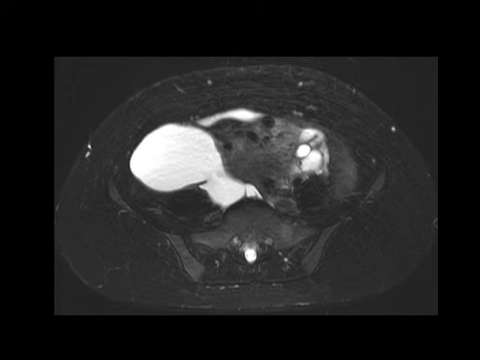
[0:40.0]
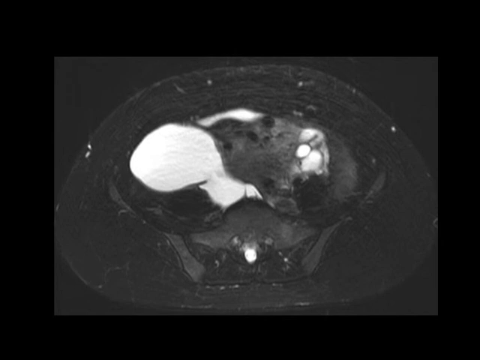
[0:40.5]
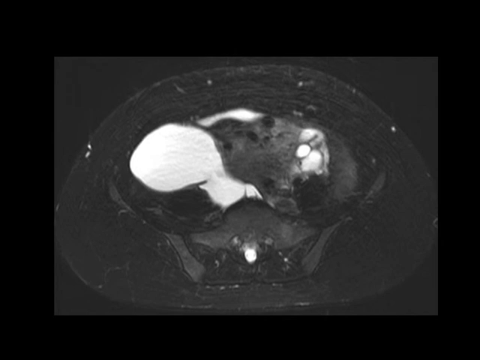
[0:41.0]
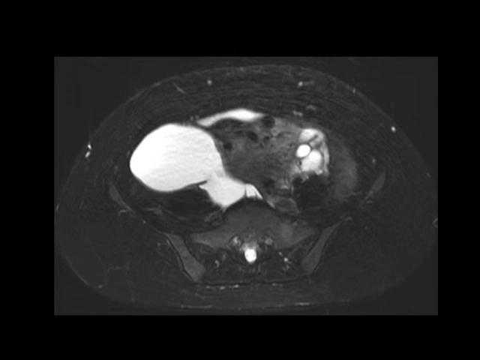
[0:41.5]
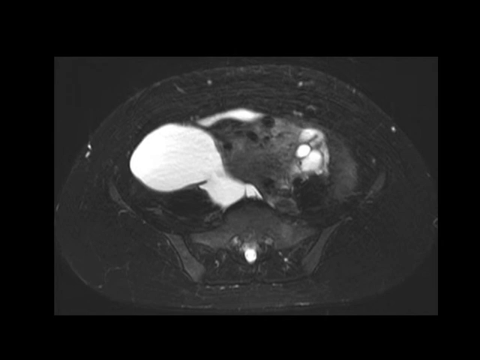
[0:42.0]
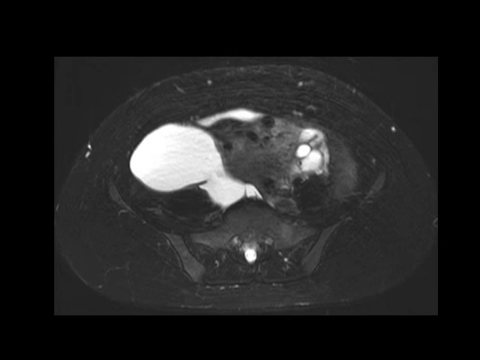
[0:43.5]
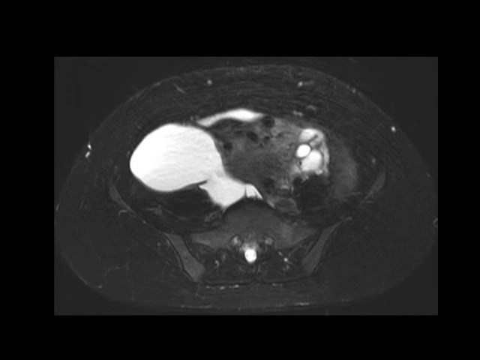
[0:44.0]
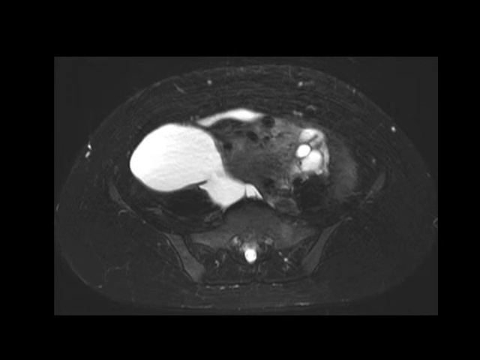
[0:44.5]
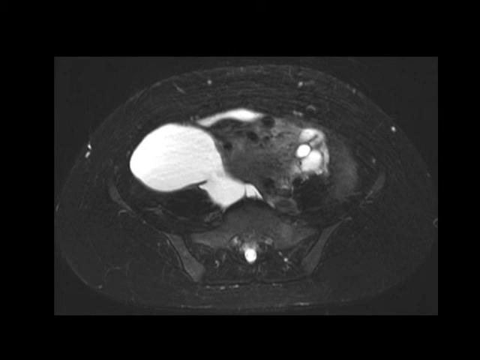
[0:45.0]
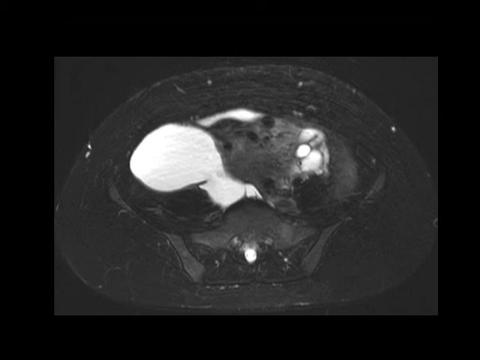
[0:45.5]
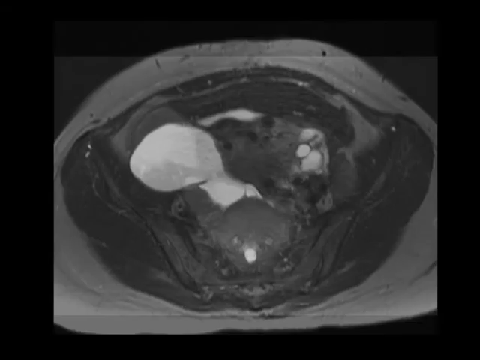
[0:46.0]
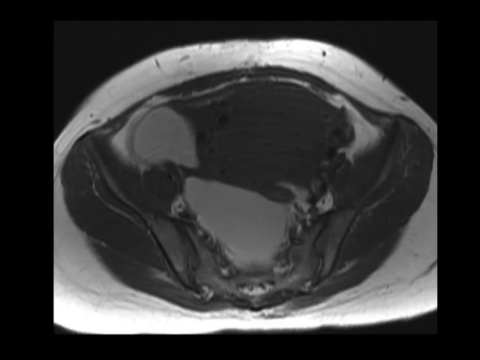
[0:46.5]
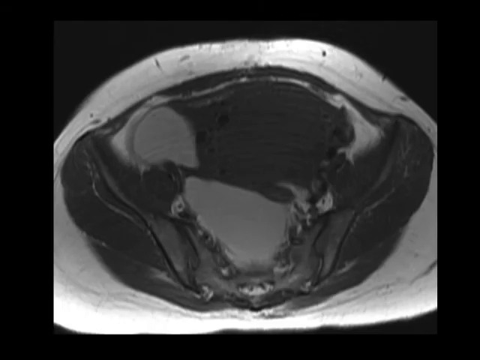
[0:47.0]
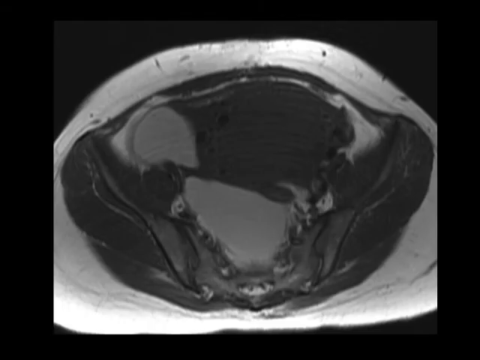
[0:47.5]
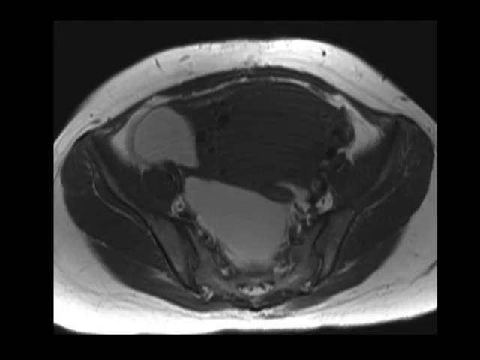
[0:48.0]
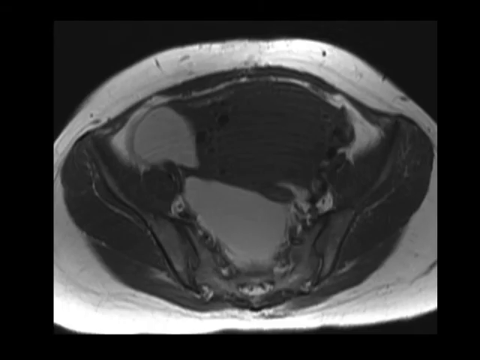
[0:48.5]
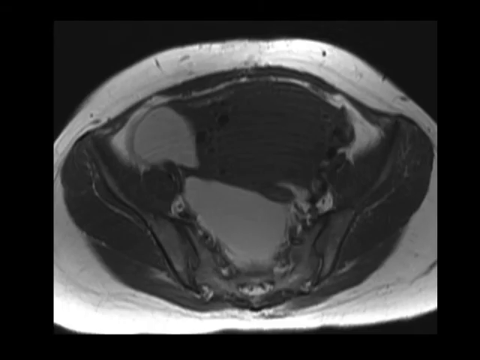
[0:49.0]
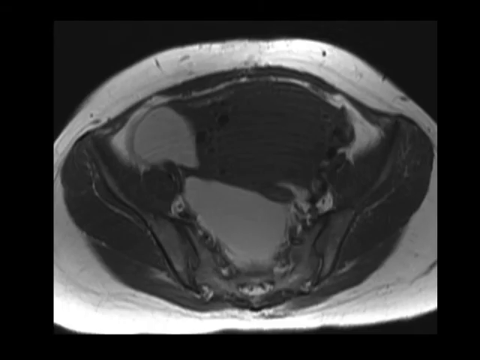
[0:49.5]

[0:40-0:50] The object is more elongated and oval-shaped. There is white up toward the left of a gray mass, larger at the end of this white object and smaller through the middle, with a very small white point, coming underneath a gray bridge-type area. There are multiple striations of black and gray. It is set on a darker gray square on a black background, about a fourth of the way in. Multiple white dots are on this x-ray, with small white areas toward the top. In a second x-ray, white surrounds an oval-shaped object set on a darker gray background with a black border. The x-ray has a white area, lighter gray in the middle, and lighter gray toward the left corner that looks like it could be a teardrop. The lighter gray in the middle has some white areas that are very rough and uneven.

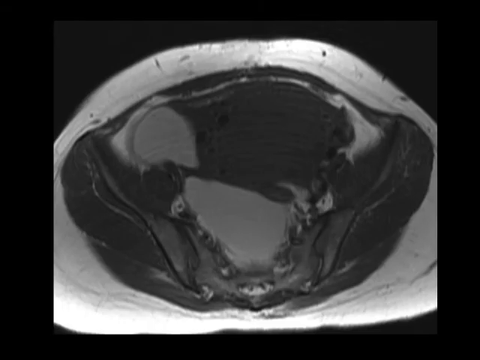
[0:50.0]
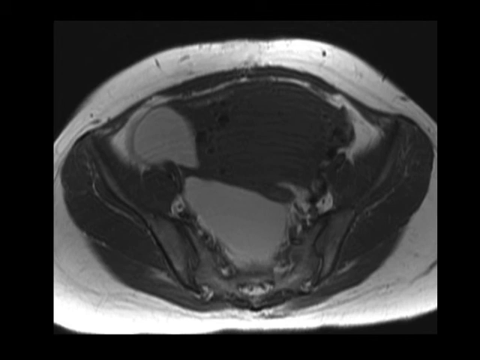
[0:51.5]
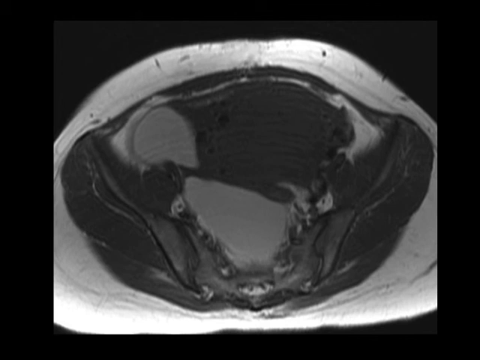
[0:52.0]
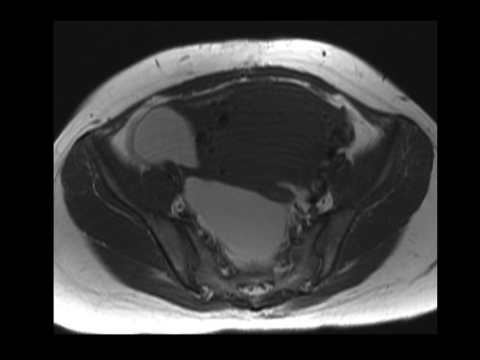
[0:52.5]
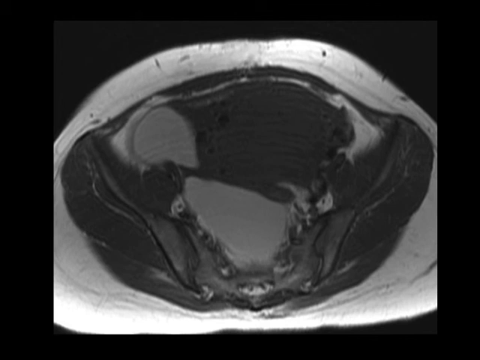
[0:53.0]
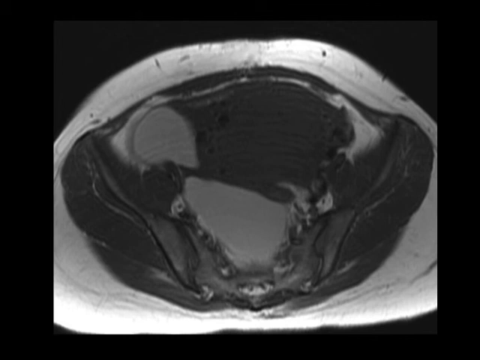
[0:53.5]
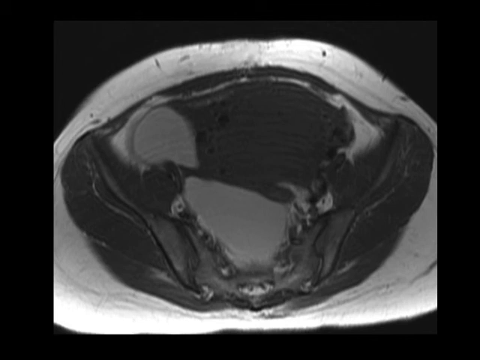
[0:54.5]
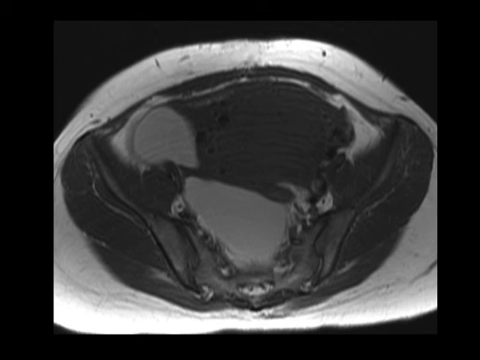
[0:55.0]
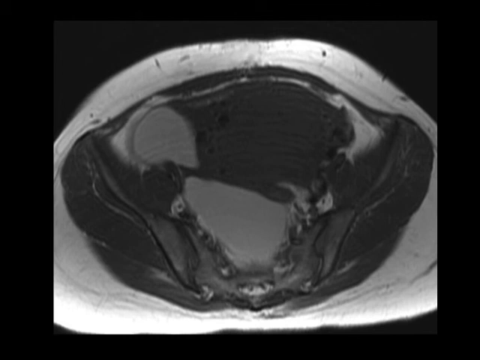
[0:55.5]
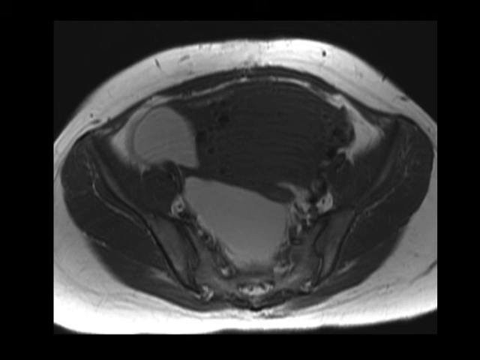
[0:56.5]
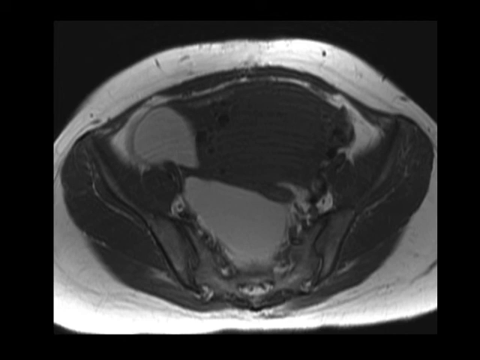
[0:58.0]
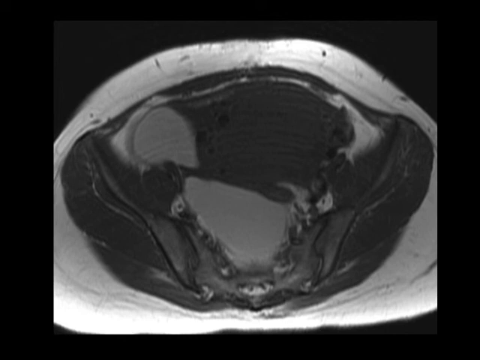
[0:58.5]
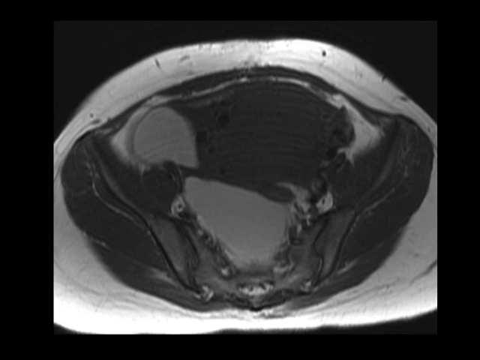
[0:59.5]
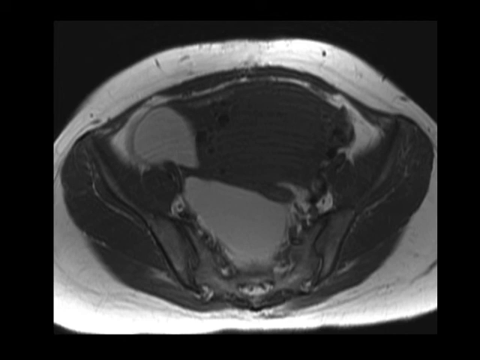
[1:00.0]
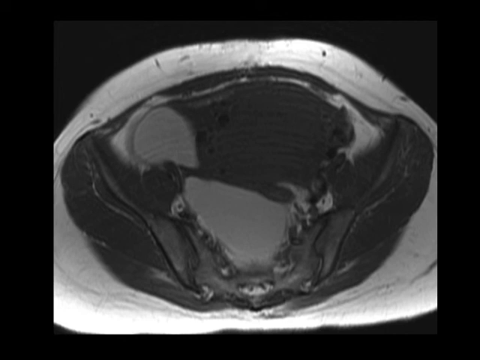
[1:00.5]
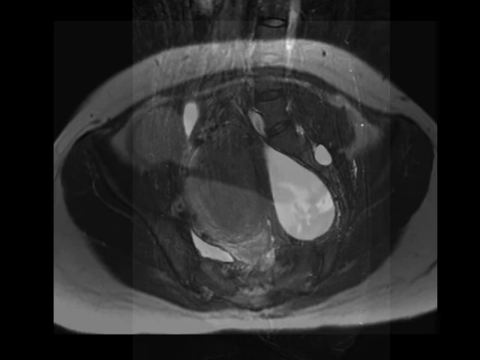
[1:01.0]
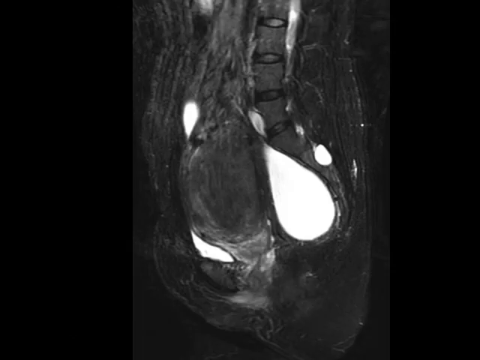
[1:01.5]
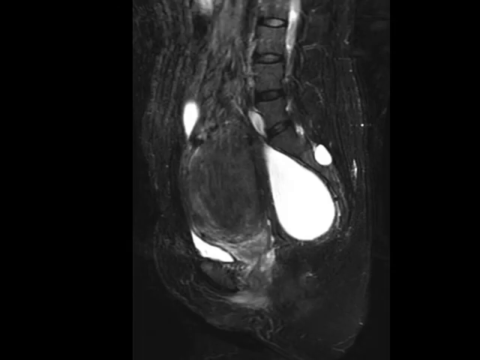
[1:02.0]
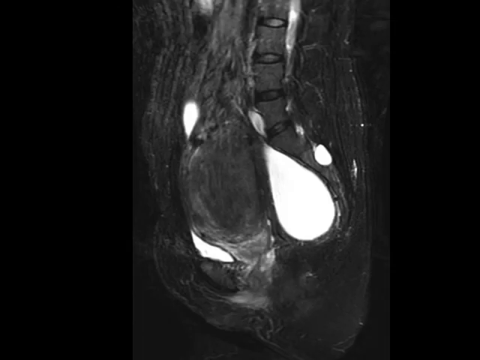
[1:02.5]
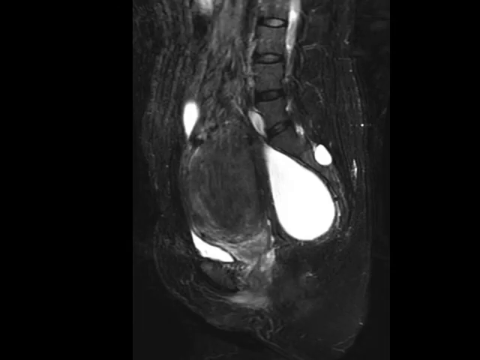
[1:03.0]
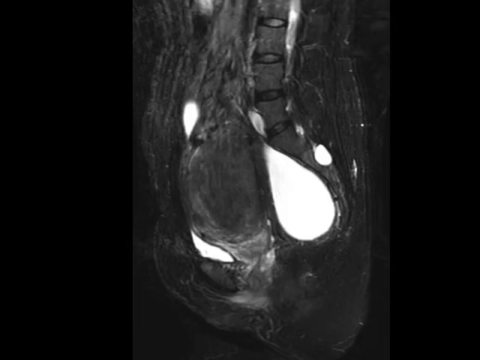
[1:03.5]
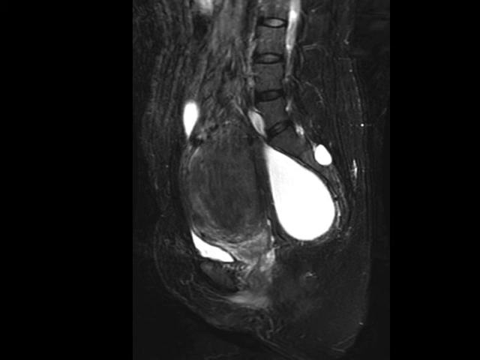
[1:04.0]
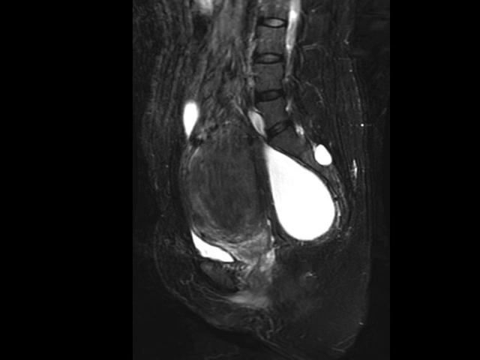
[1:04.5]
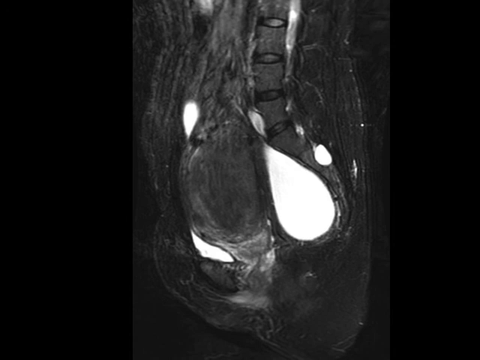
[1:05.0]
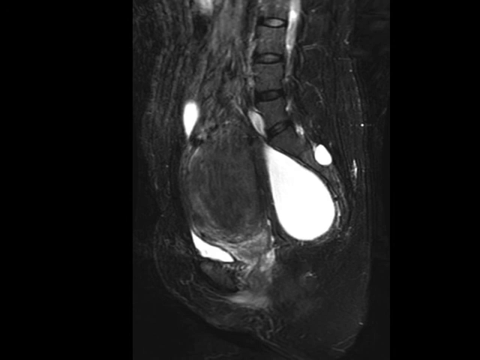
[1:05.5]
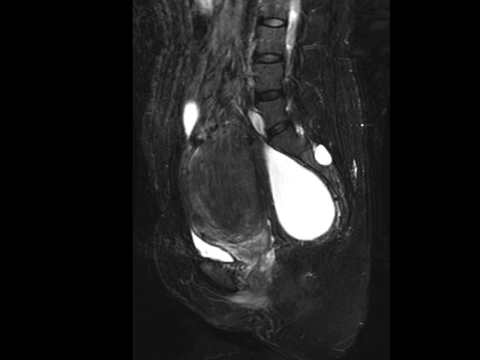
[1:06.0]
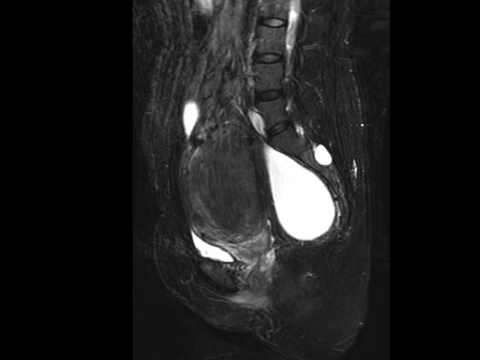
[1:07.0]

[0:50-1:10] An x-ray has black borders and a very dark gray background. A white misshapen oval is at the top, coming down to the bottom and on each side, and the bottom is very smooth and thin. The object itself looks like it has run off the dark gray area. There is white around the darker gray object in the middle. Something like a lighter gray teardrop is up to the left on the inside of the black object, surrounded by very thin white. A larger area inside is lighter gray, more of a darker gray, in multiple shades of gray; it has rough edges about halfway down the screen and comes to an oval at the bottom, in the middle. It is about an inch wide at the top and about half an inch at the bottom. Misshapen little dots with some white in them are scattered toward the bottom. There are striations on the white surrounding the black area, and the black area itself has striations that look like they divide the black mass into lobes or different sections.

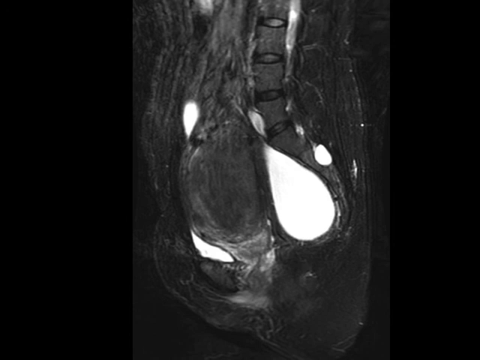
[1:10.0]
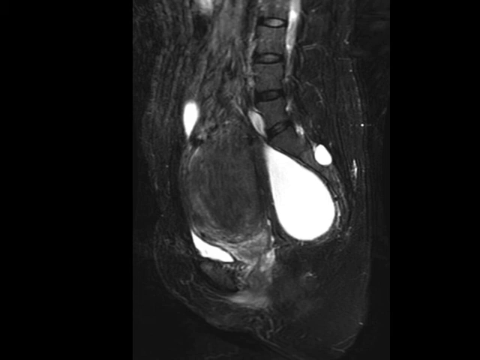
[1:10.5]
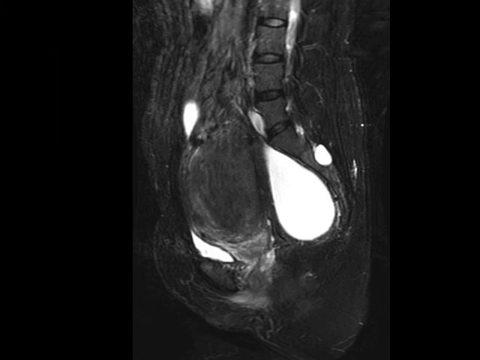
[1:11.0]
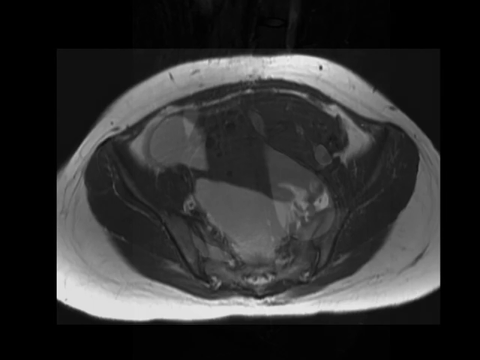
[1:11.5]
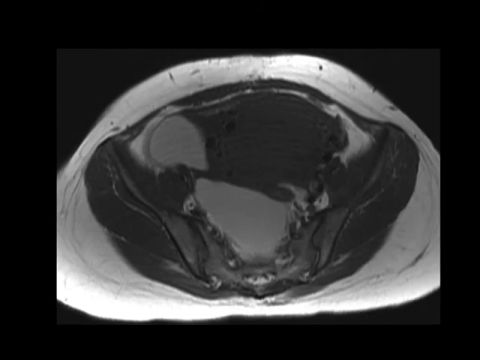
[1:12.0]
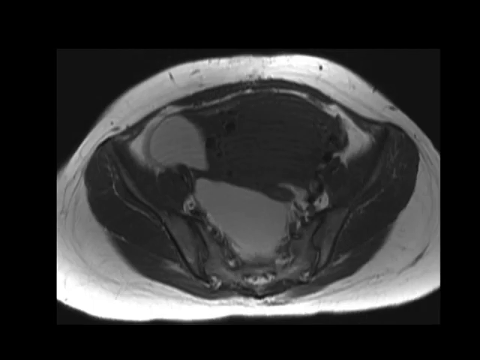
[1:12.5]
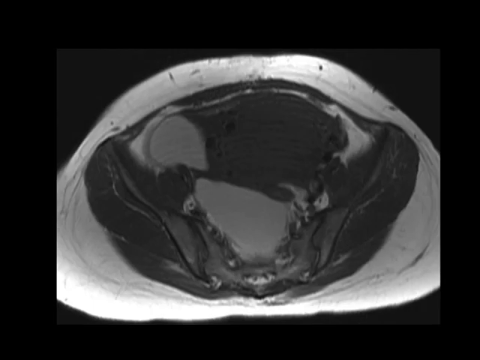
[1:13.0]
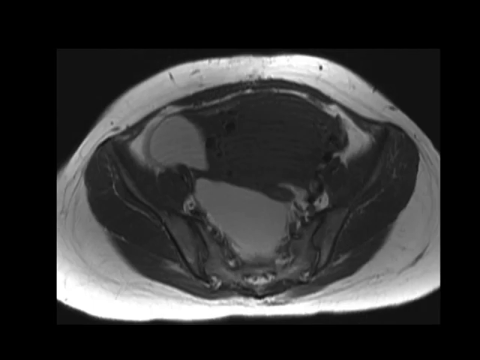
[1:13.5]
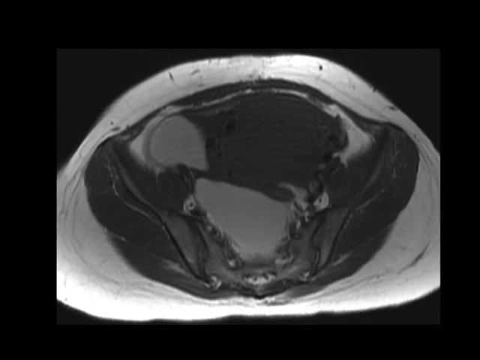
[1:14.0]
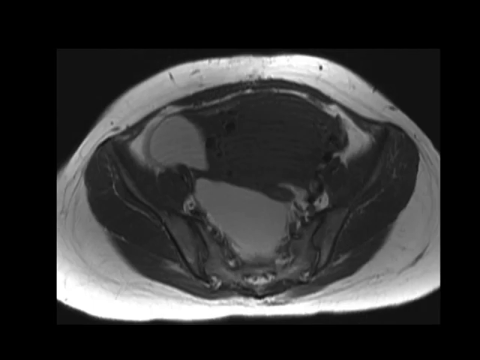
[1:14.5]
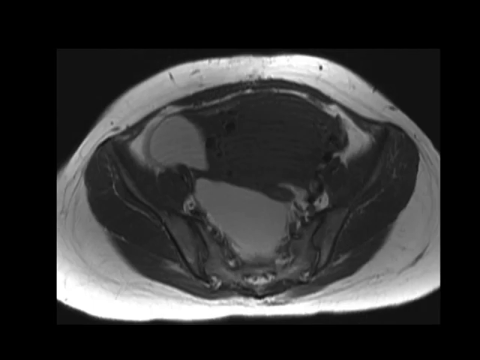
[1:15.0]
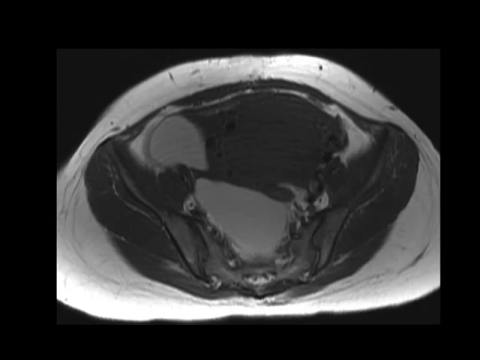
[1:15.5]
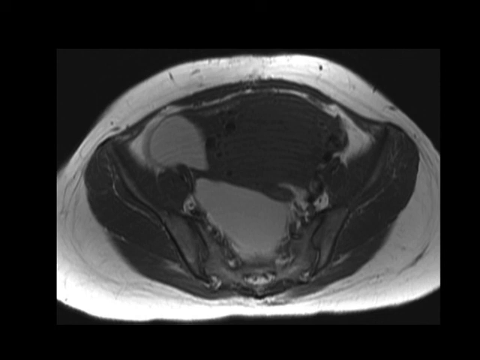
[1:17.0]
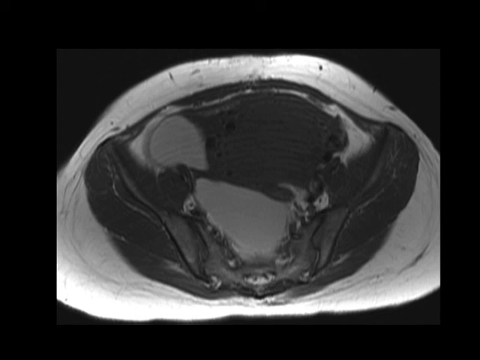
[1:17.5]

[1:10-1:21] The image looks like an x-ray, with black on both sides: about two inches of black on the left from the edge to the object, and about an inch on the right. The object is linear and takes up half of the space in the middle, coming down each side. A tube-type object comes from the top, larger toward the top, and has areas on it; it looks divided. The object is a lighter gray than the black, and inside that gray is lighter gray that is linear, vertical, uneven and misshapen, with multiple shapes going down. The middle of the object is a darker gray. A white teardrop comes from the right side of the middle. On the upper right side is a tiny, small oval drop, and at the upper left side of a bowl-type solid object is a tiny teardrop. At the bottom, a white area is underneath the bowl-type object. A second object has more white around it and different areas; the gray area in the middle is slightly enlarged and goes up more toward the left, still with small dots around it, and at its top left is a gray teardrop shape.